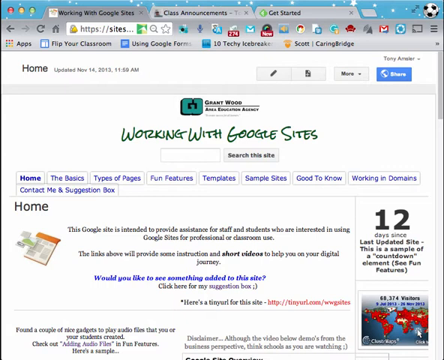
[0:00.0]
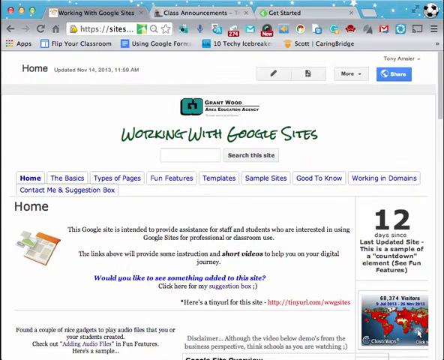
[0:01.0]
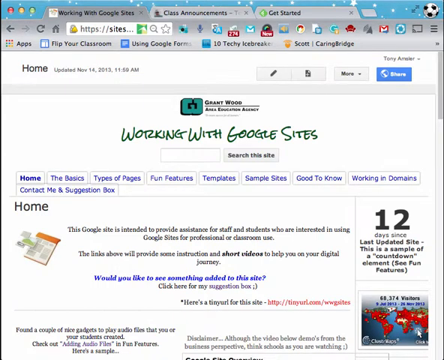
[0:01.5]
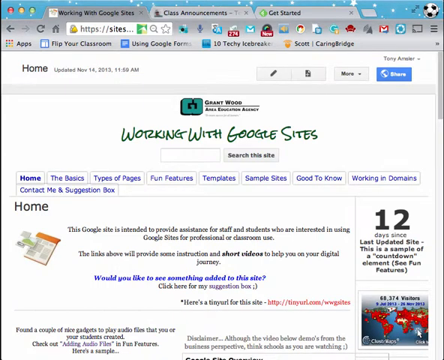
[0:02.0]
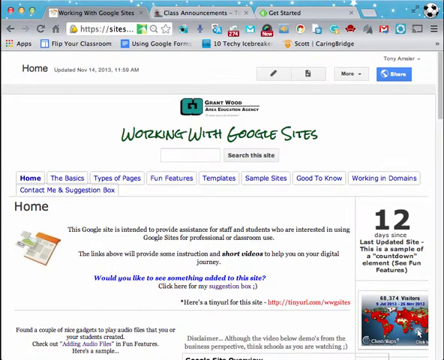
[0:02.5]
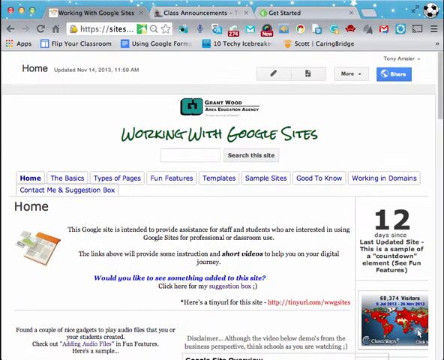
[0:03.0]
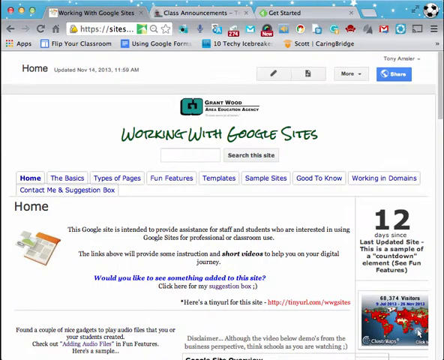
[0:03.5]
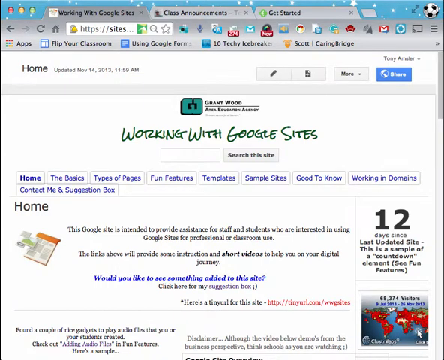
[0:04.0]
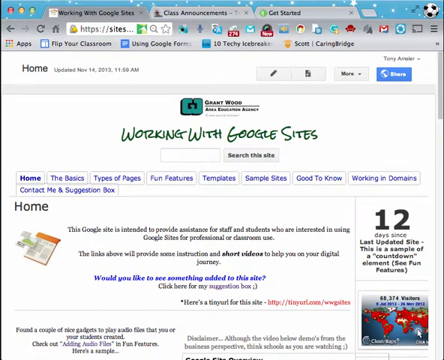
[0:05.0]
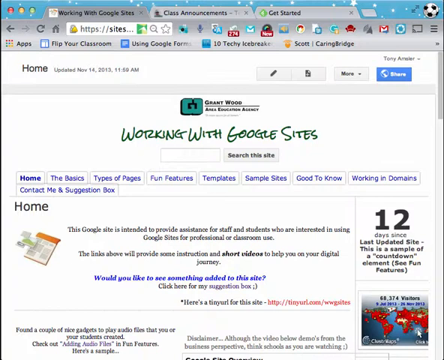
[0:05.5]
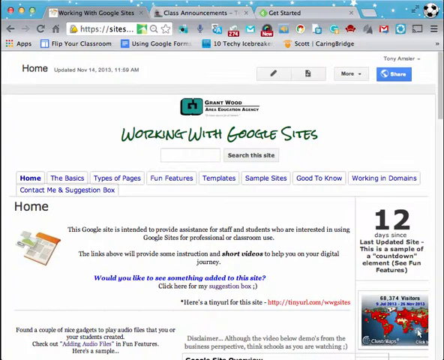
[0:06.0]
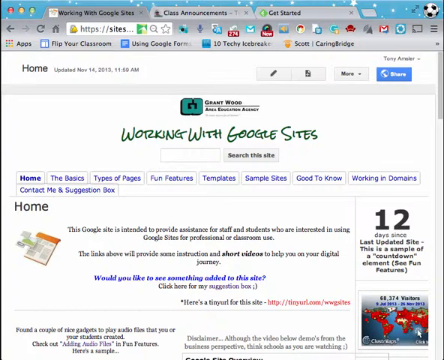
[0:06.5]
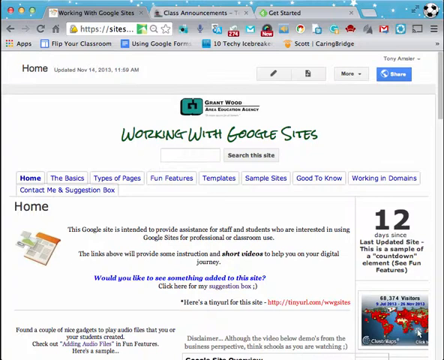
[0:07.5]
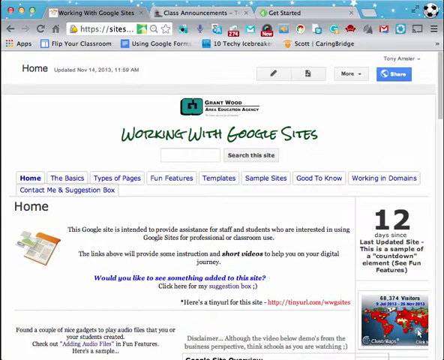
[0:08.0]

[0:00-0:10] A website displays "Working with Google Sites" in green. There is a search bar, with "Search this site" to the right of it. At the very top of the screen are three tabs; the open tab is "Working with Google Sites." In the middle of the site is "Home," followed by the text "school sites intended to provide assistance for staff and students who are interested in using Google sites for professional or classroom use. The links above will provide some instruction and short videos to help you on your digital journey."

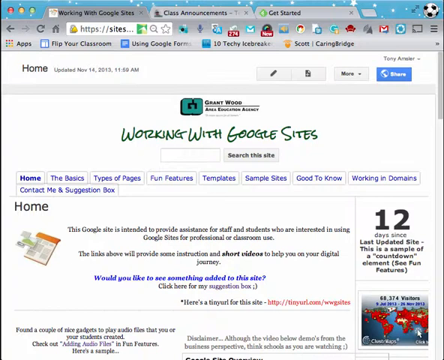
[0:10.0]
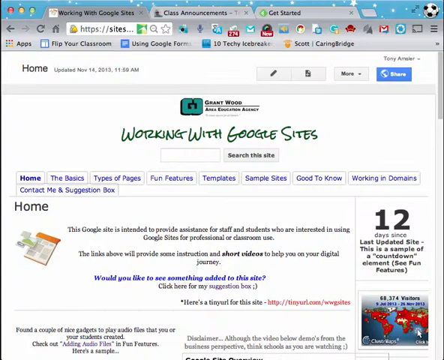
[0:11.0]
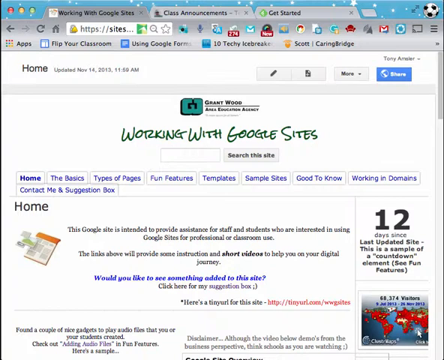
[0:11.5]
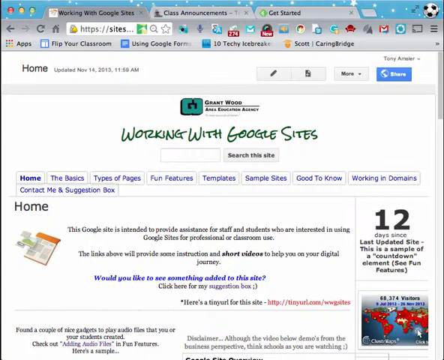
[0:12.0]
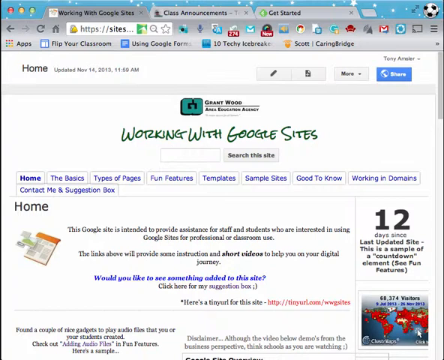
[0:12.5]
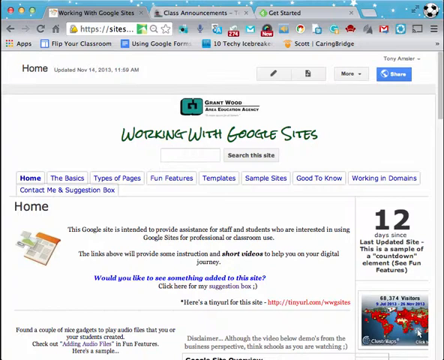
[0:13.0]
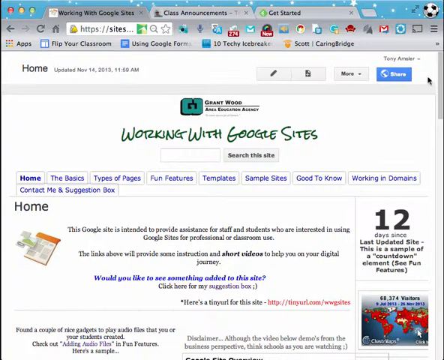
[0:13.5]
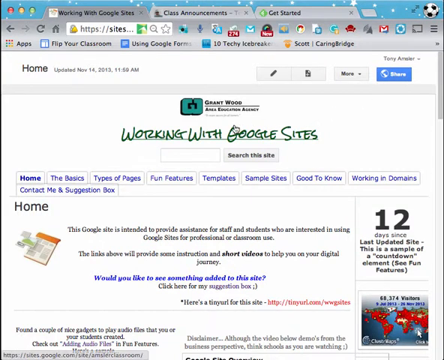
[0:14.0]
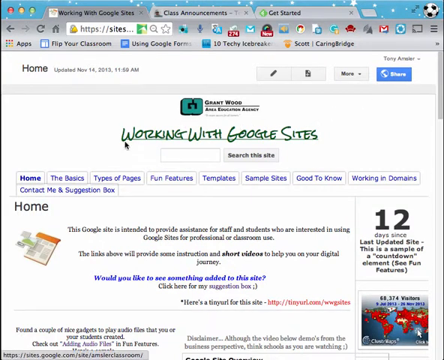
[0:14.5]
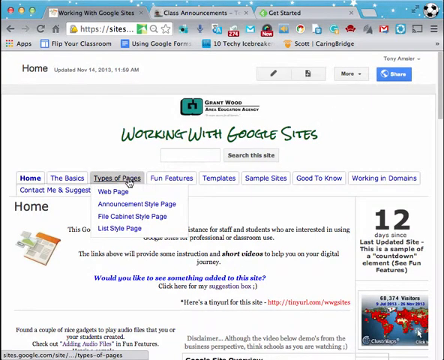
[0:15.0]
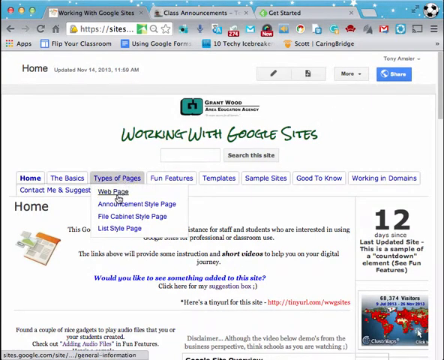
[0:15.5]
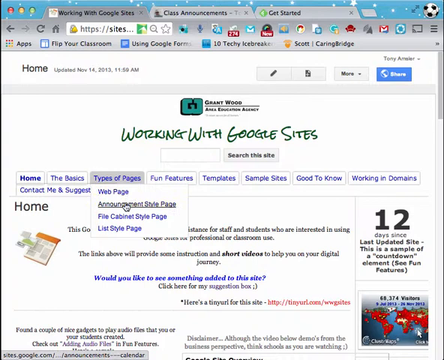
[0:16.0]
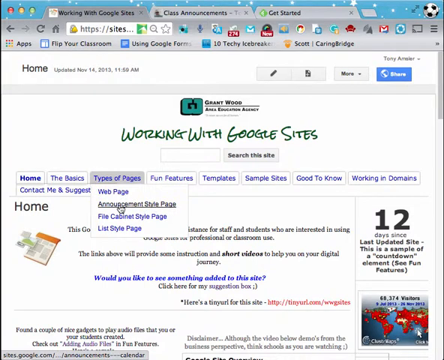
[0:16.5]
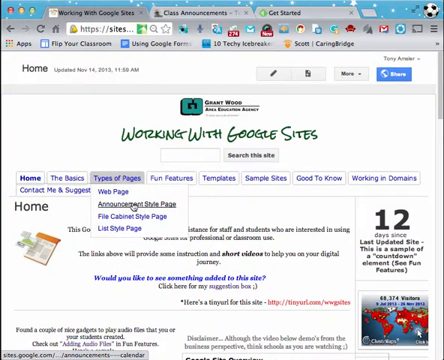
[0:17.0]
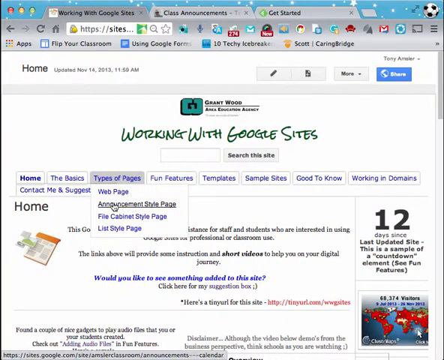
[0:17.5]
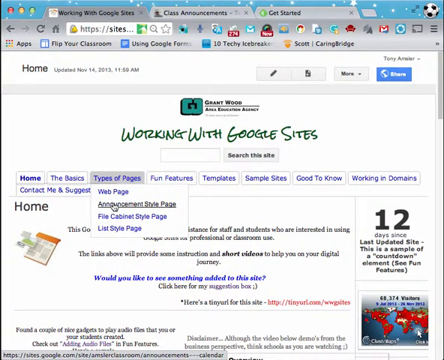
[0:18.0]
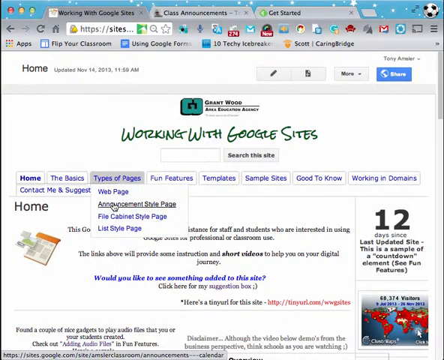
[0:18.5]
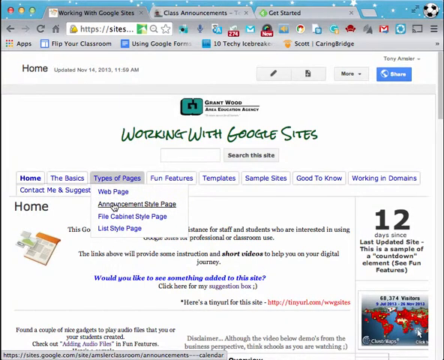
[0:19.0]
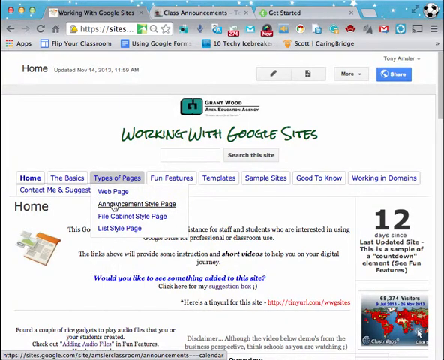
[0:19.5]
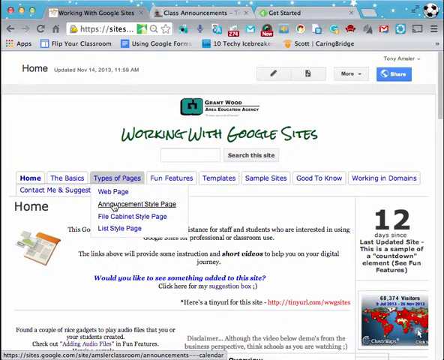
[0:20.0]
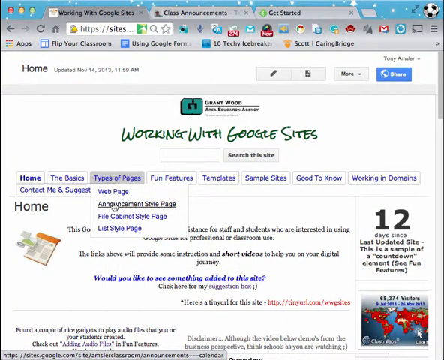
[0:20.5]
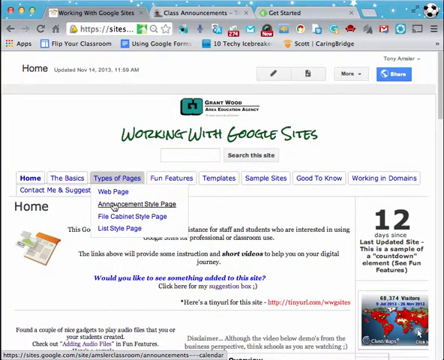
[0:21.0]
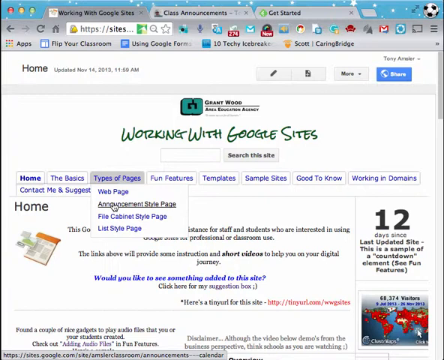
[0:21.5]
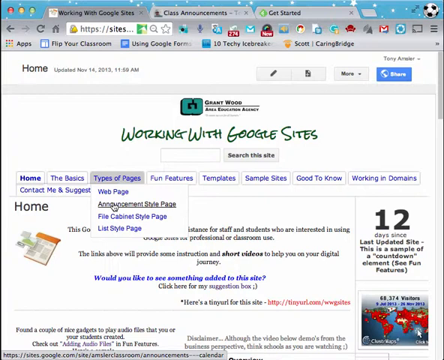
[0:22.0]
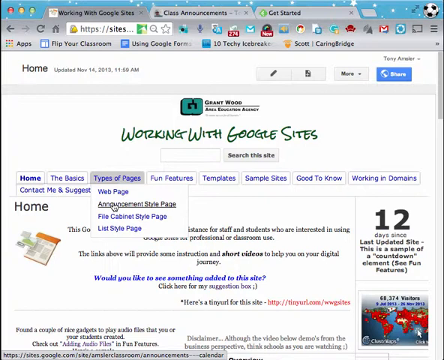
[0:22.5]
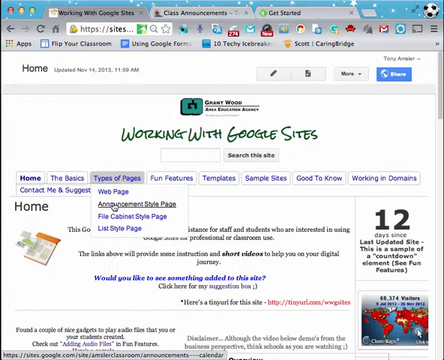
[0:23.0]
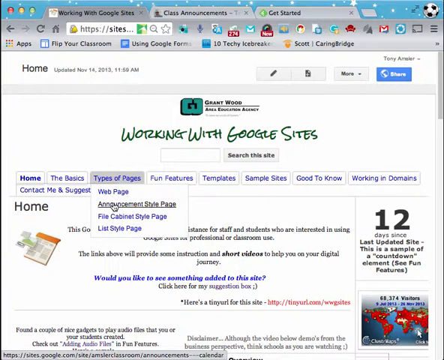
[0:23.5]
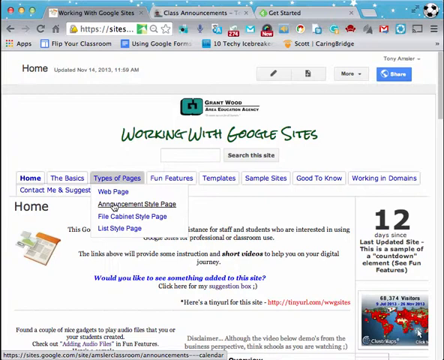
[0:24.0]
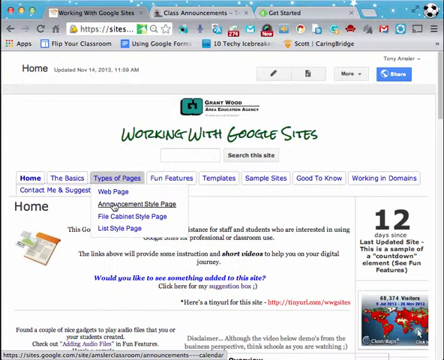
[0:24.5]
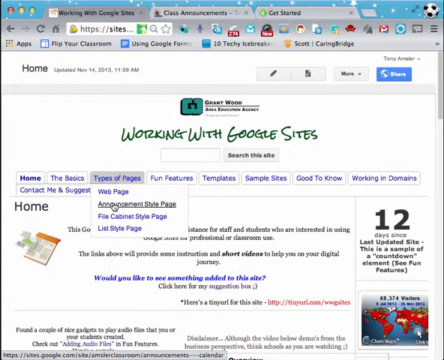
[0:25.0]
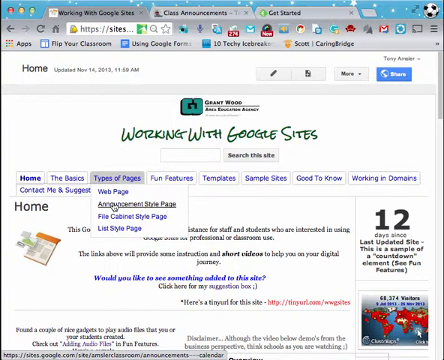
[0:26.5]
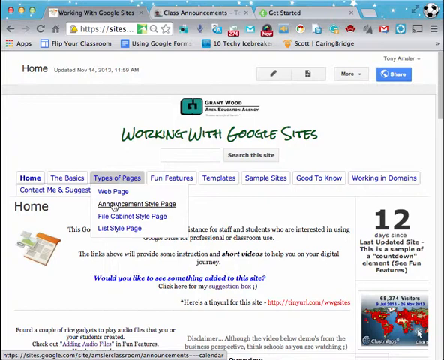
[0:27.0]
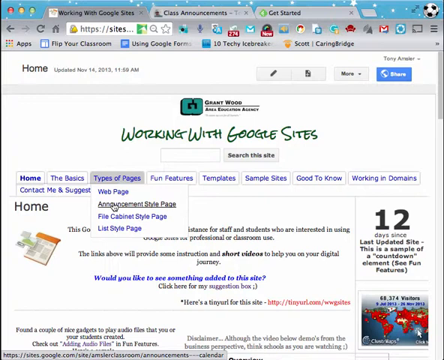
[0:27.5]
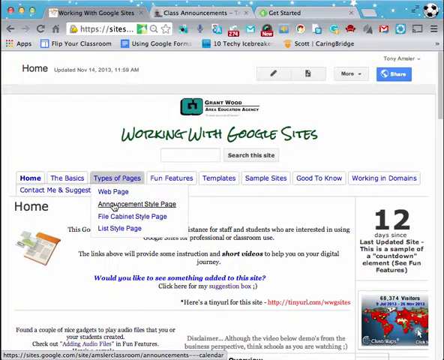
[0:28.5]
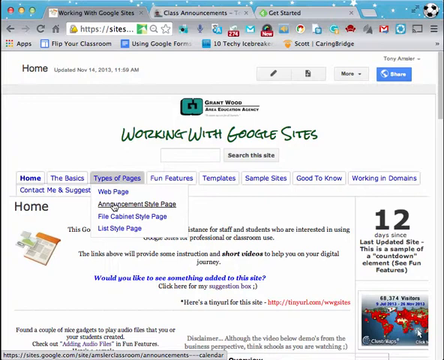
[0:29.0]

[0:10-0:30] What appears to be a hyperlink in blue reads "would you like to see something added to this site," with a "click here" link for suggestions or a suggestion box, followed by an emoji that looks like a semicolon and a parenthesis. There is an asterisk, after which the text reads "Here's a tiny url for this site," followed by a website address in red. The user clicks on a tab. There are maybe 10 tabs: Home, The Basics, Types of Pages, Fun Features, Templates, Sample Sites, Good to Know, Working in Domains, and Contact Me and Suggestion Box. The third tab, Types of Pages, is selected, and a drop-down box appears with 4 links. The user selects Announcement Style; a word apparently is cut off, one that begins with "Poop."